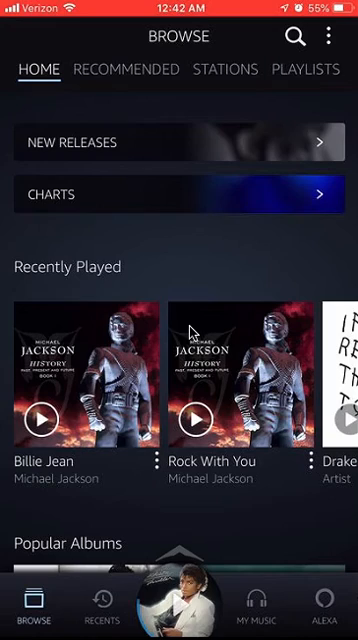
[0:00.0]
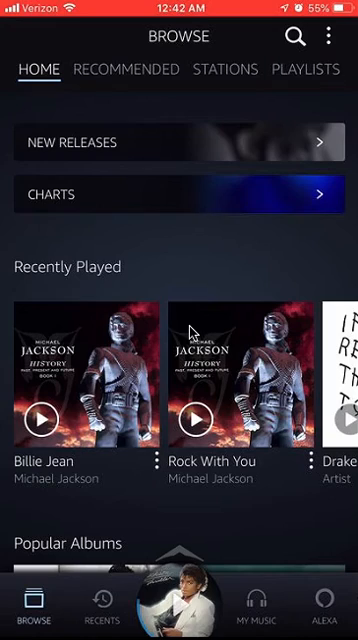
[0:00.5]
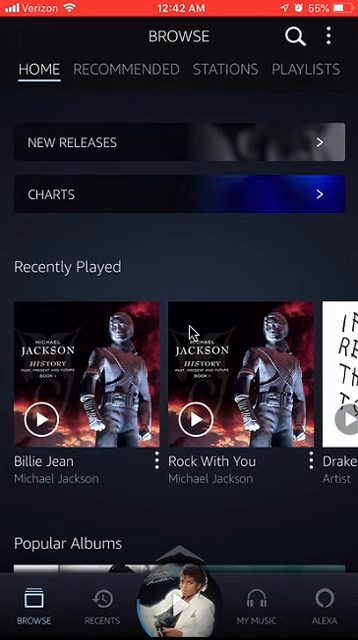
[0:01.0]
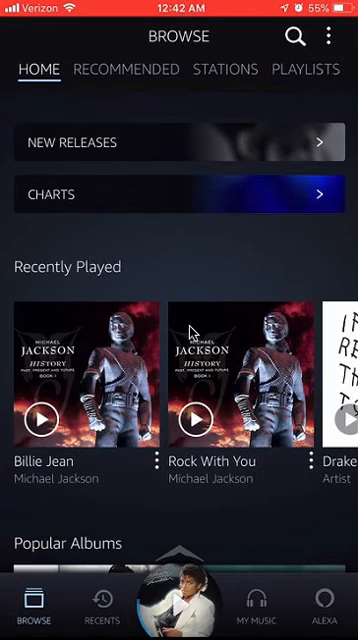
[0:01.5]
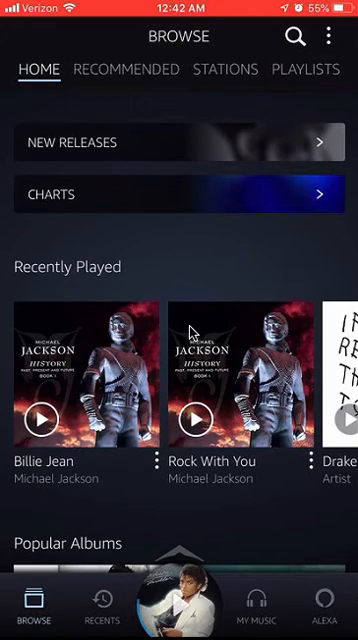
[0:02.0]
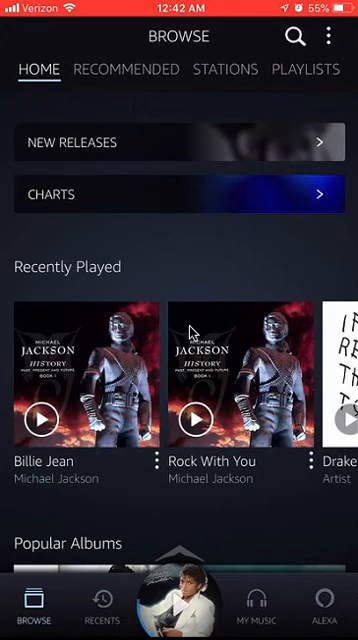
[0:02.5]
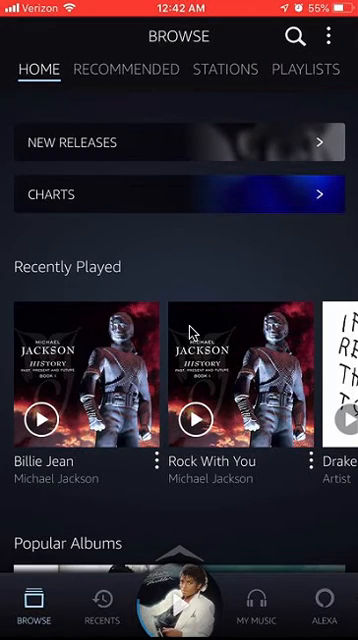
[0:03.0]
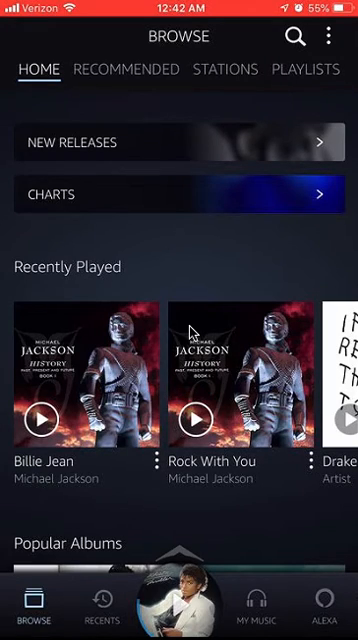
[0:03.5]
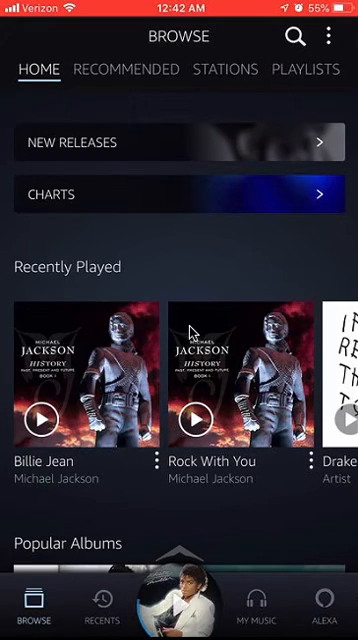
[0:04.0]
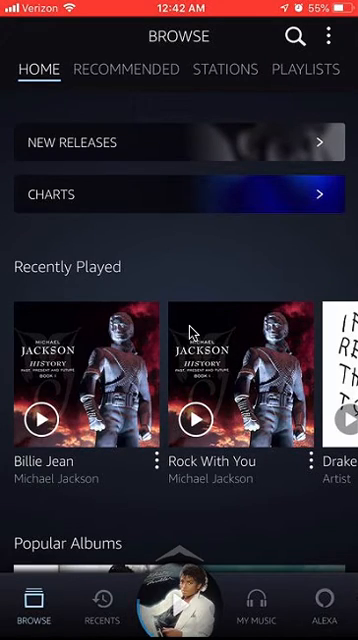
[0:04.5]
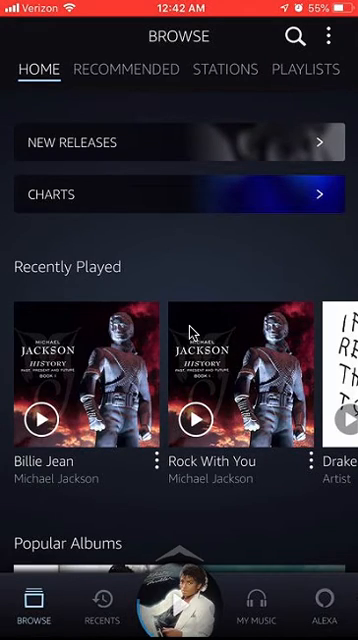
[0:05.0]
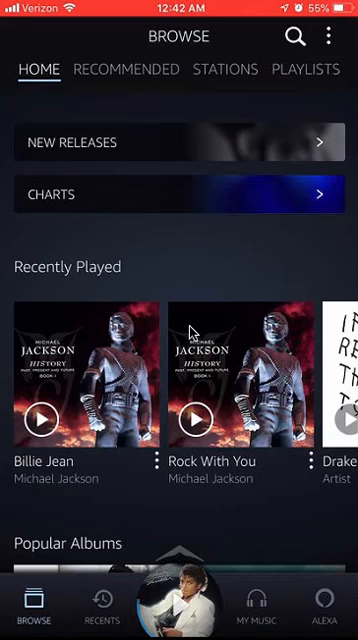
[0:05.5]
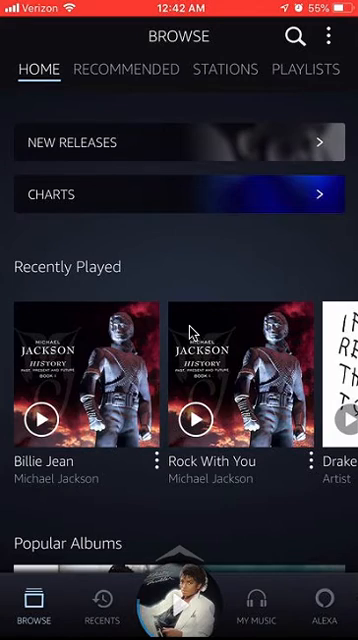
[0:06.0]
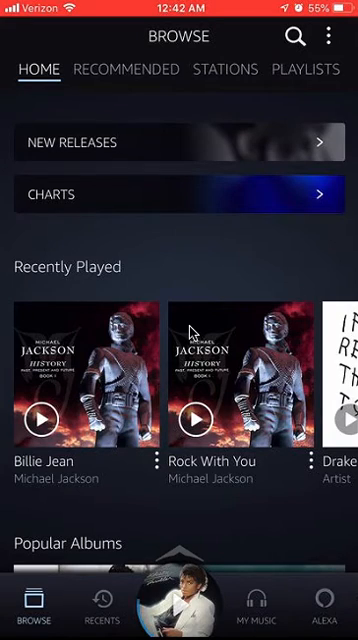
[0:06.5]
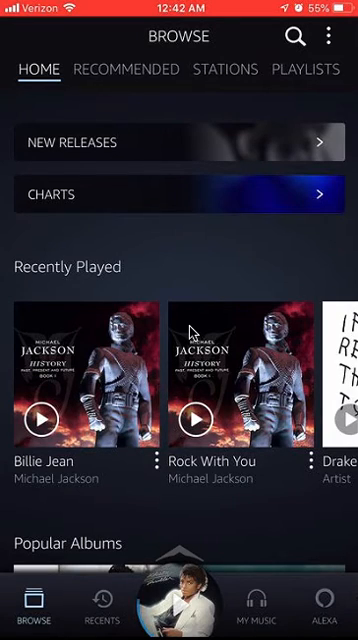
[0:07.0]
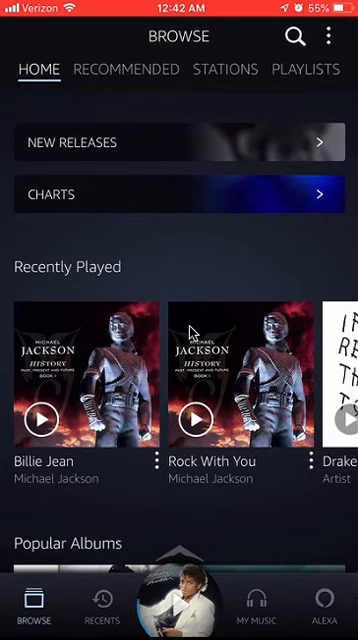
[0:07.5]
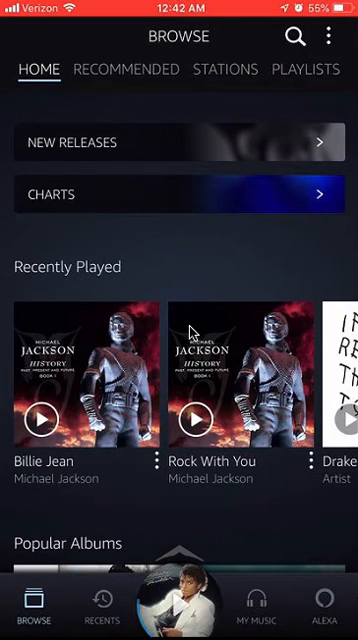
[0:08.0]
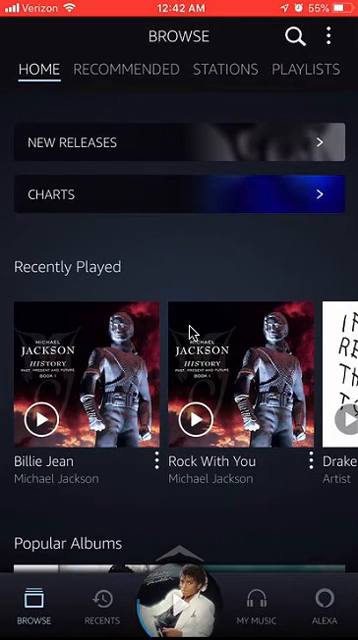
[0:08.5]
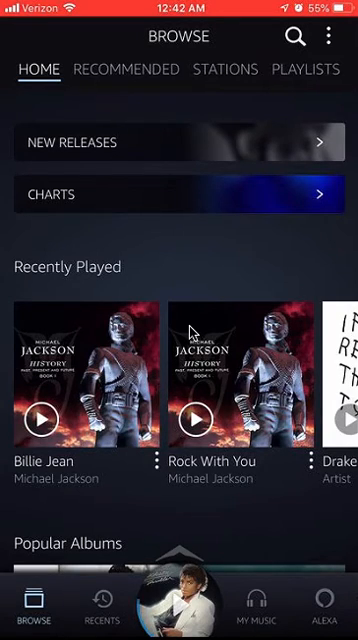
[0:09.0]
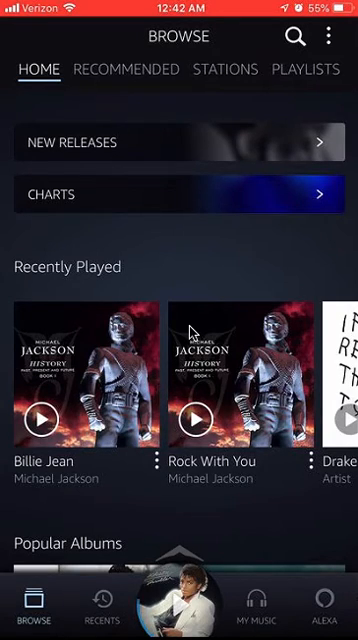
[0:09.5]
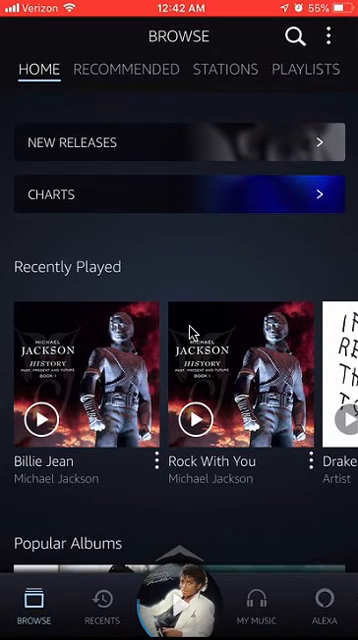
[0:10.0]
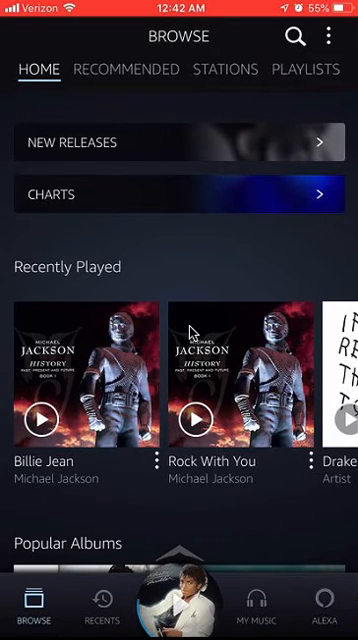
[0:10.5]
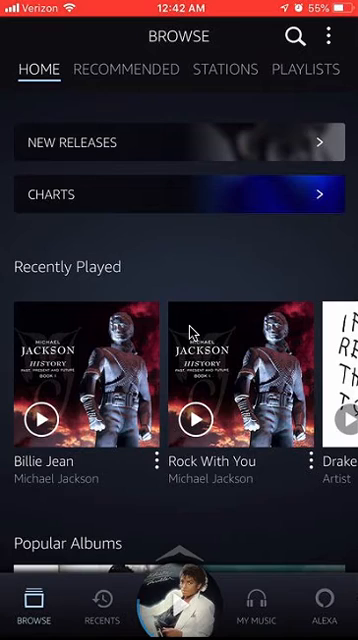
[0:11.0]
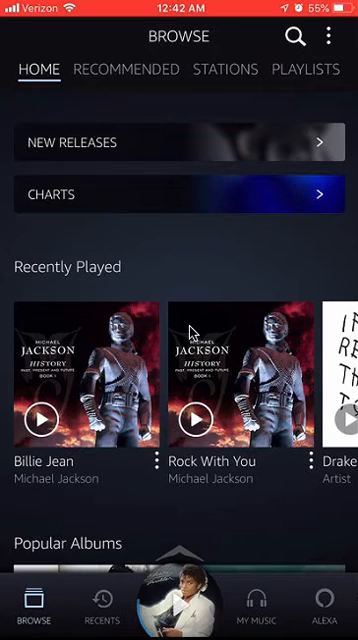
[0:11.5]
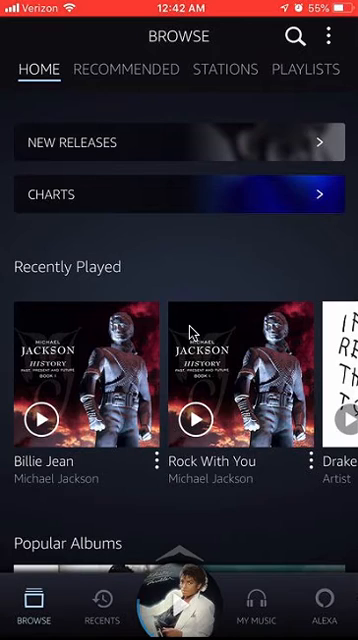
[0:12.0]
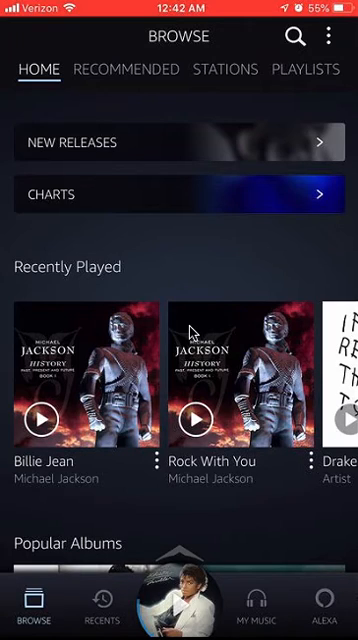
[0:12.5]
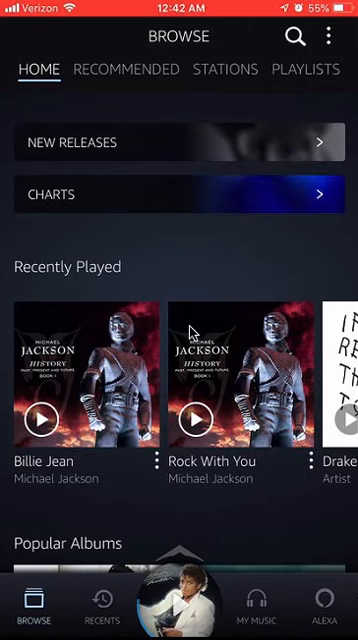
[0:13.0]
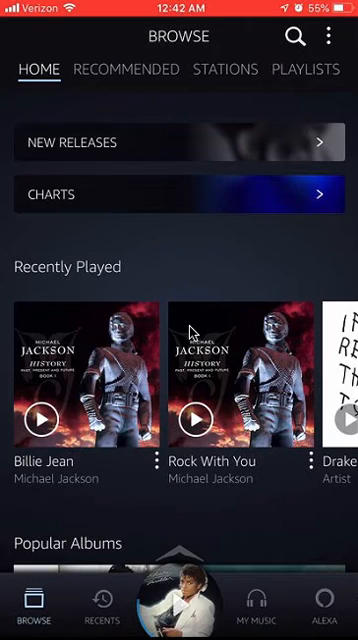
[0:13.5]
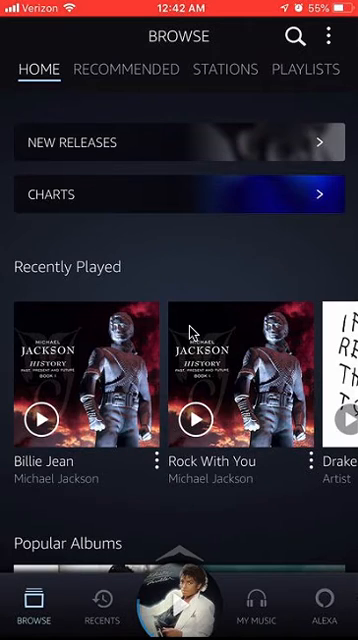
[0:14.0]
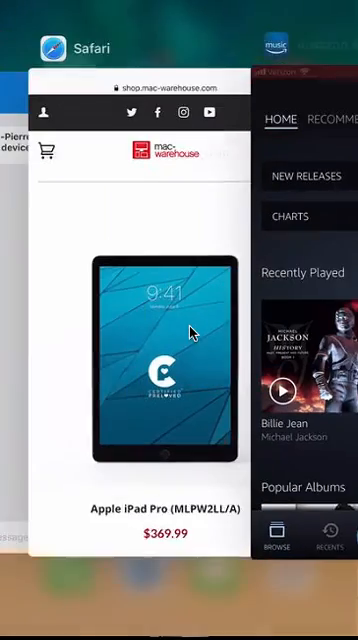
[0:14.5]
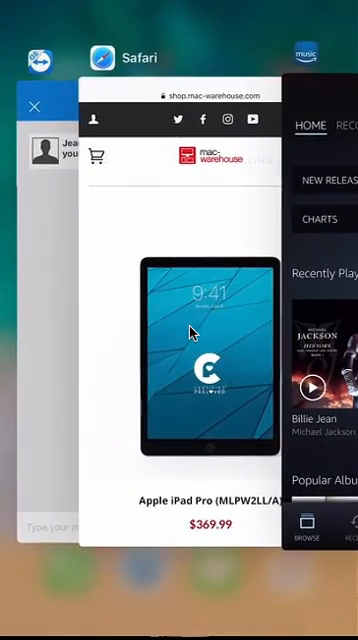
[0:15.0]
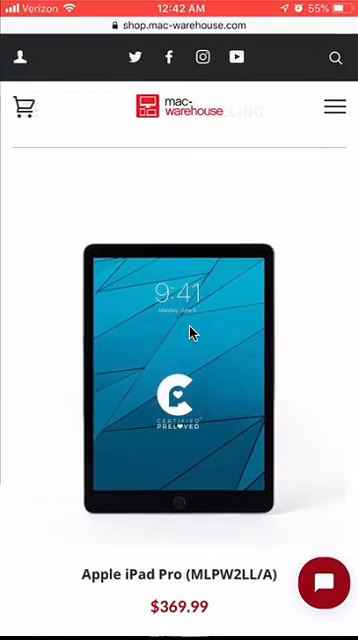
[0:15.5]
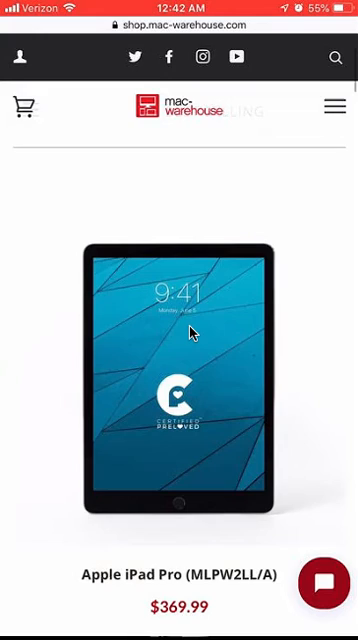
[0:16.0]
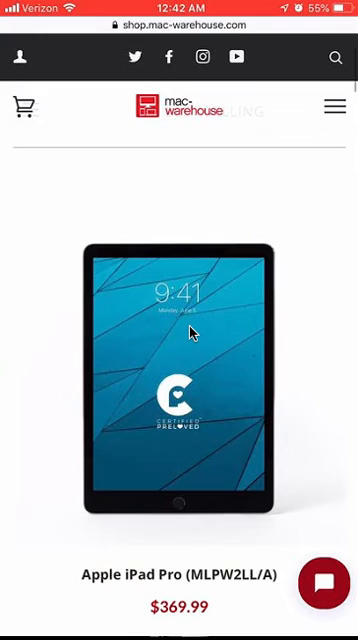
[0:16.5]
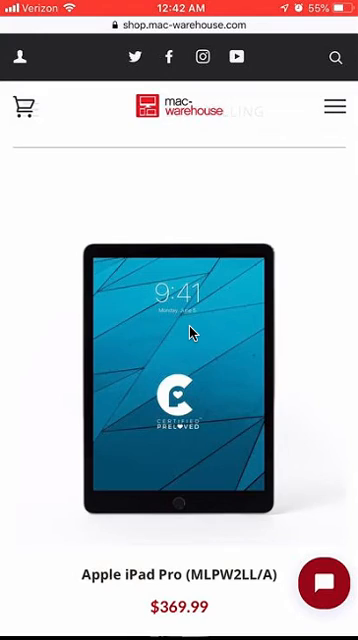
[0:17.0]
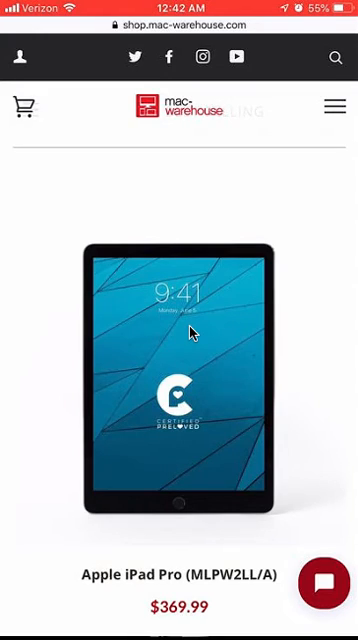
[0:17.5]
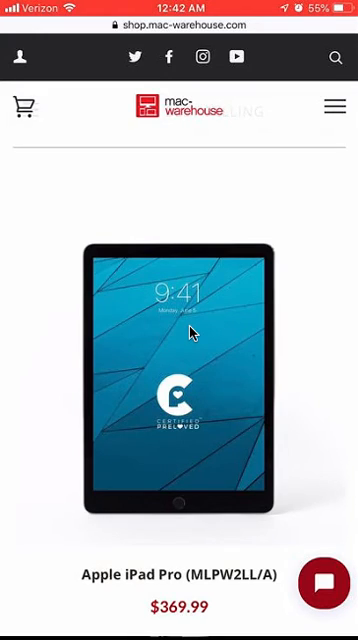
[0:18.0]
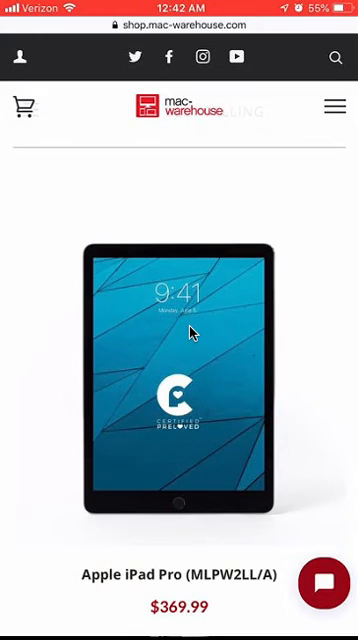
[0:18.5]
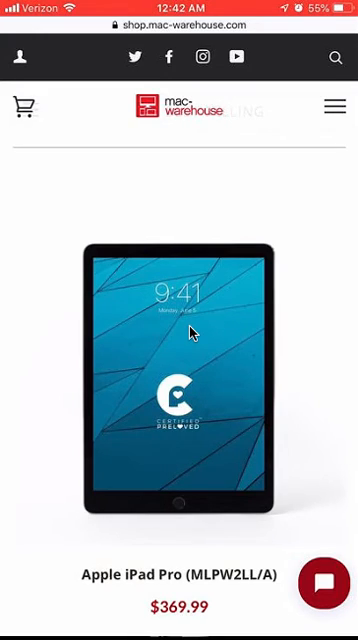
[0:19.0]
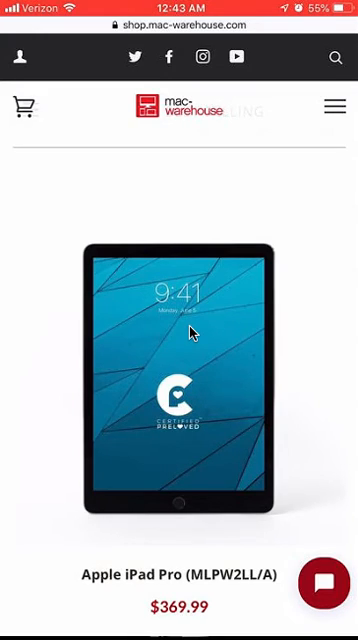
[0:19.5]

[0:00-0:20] The view appears to be of someone's phone on Verizon, browsing what looks like an album or song by Michael Jackson. There are options to play "Billy Jean" and "Rock With You" by Michael Jackson, and the cover for Off The Wall appears. The screen stays here for a moment, with options to browse and search, and to check out new releases, charts, recommendations, stations and playlists, so it may be some type of radio that plays different styles of music. The user then seems to close the app and go to an Apple iPad Pro, apparently priced at $369.99, and does little else.